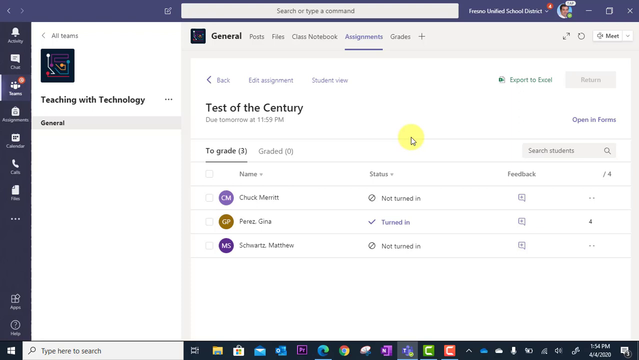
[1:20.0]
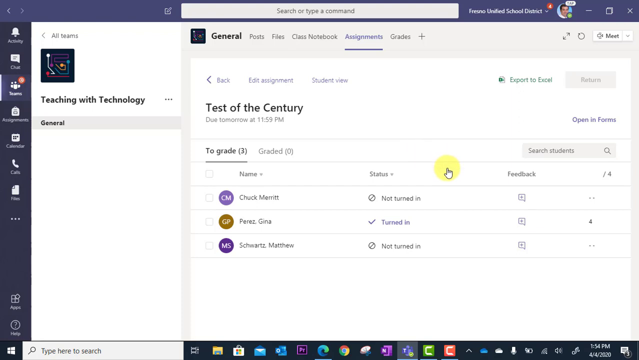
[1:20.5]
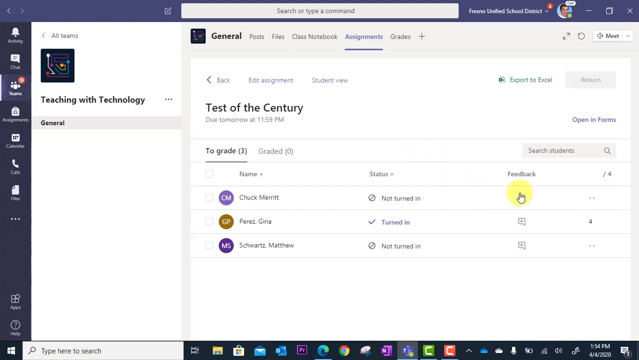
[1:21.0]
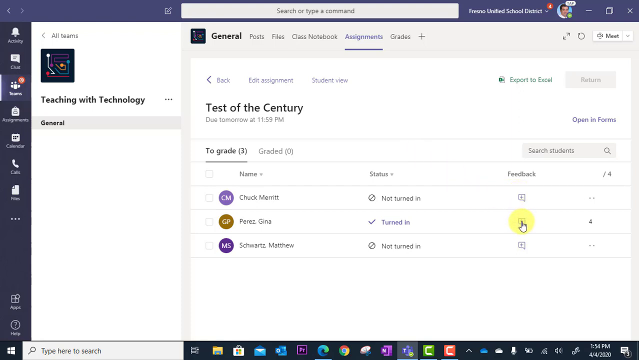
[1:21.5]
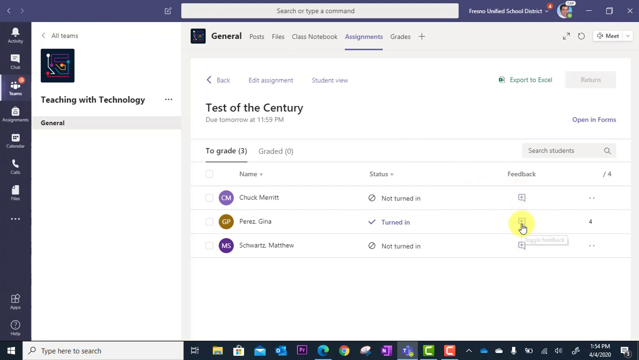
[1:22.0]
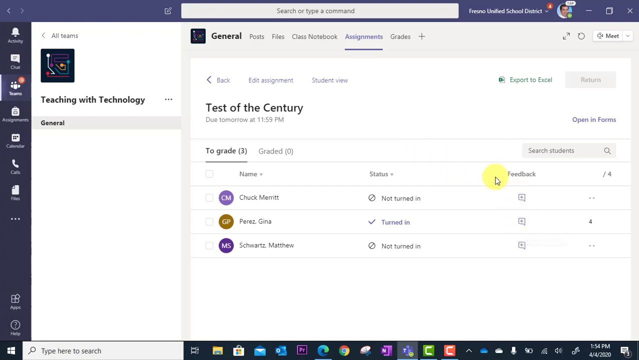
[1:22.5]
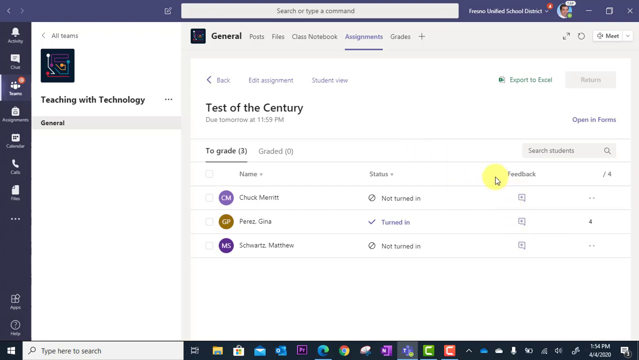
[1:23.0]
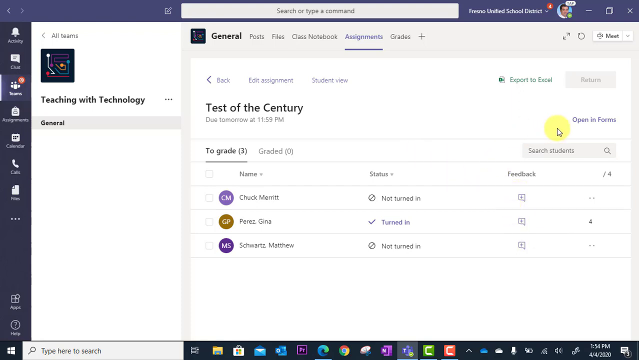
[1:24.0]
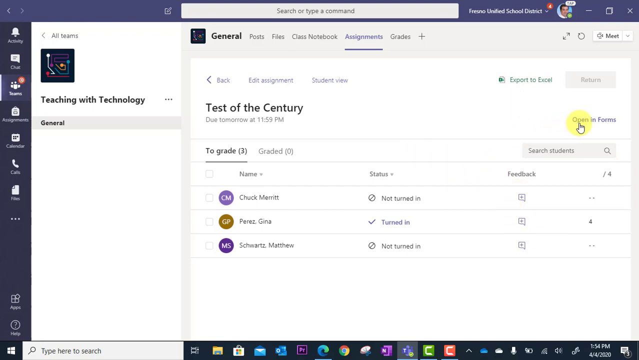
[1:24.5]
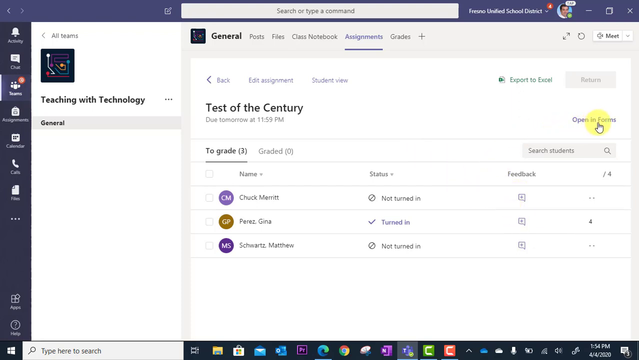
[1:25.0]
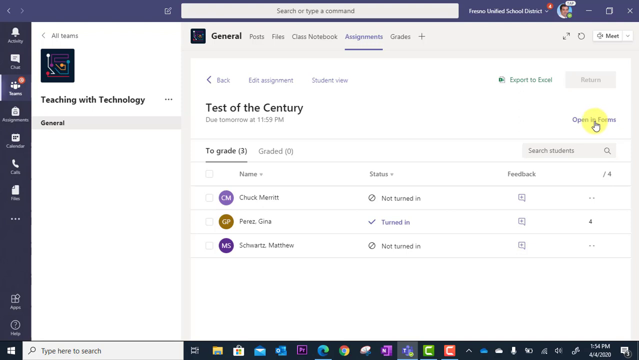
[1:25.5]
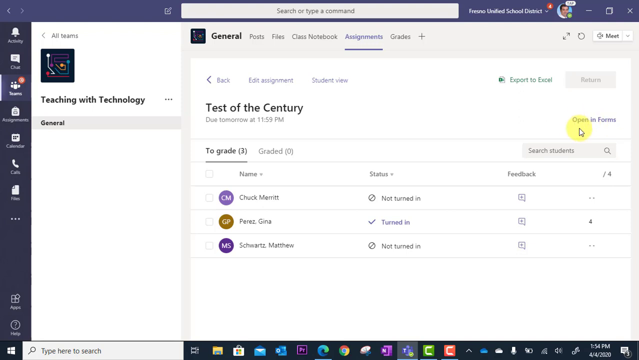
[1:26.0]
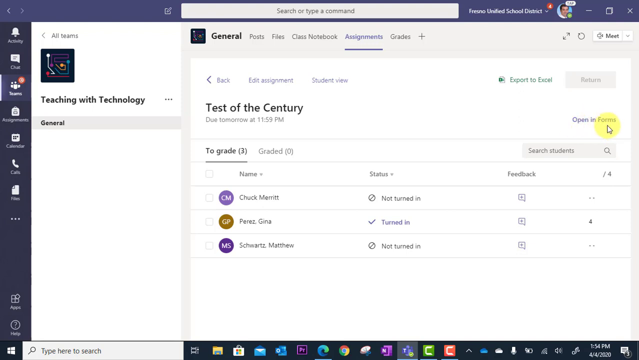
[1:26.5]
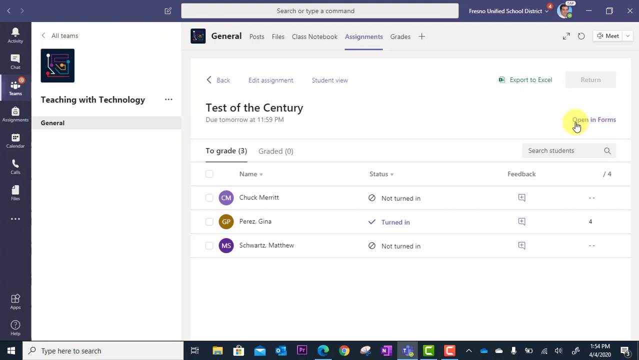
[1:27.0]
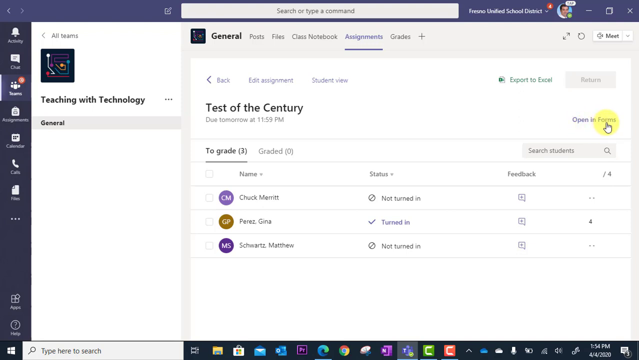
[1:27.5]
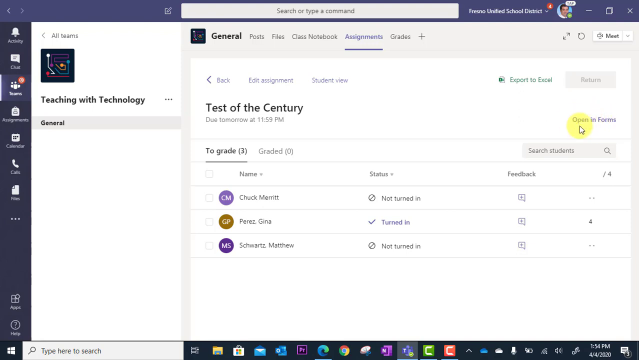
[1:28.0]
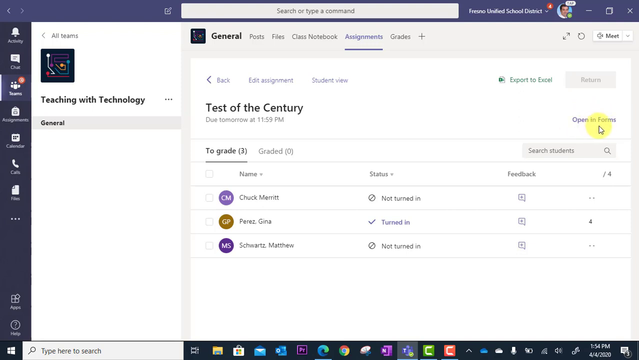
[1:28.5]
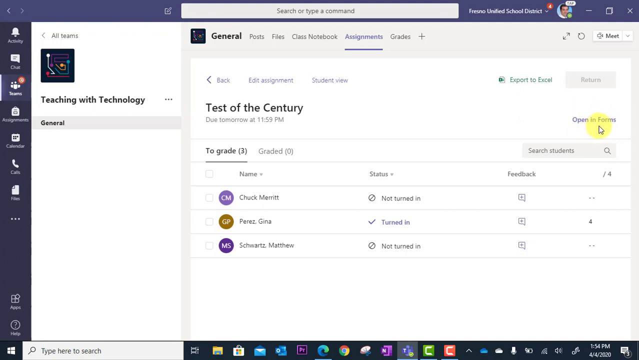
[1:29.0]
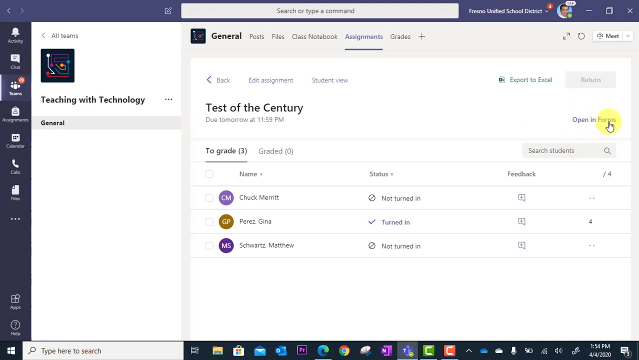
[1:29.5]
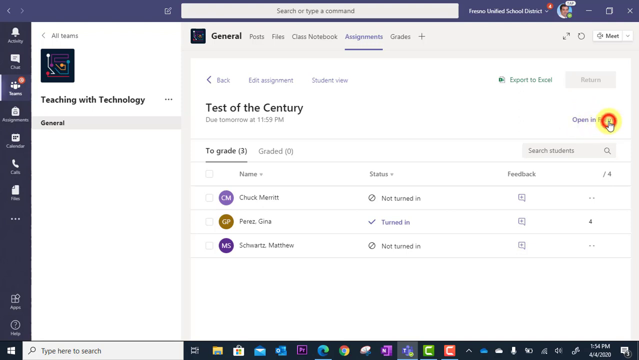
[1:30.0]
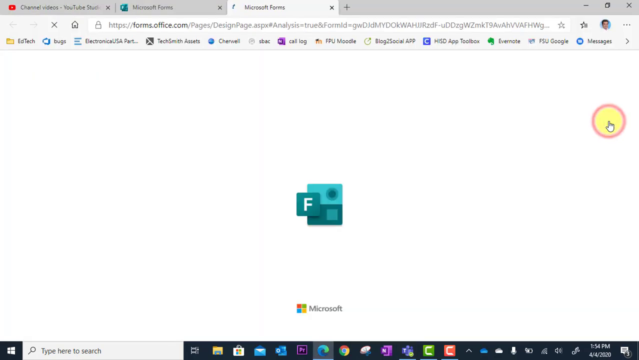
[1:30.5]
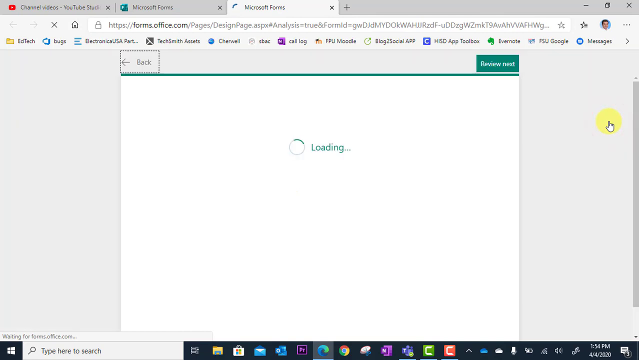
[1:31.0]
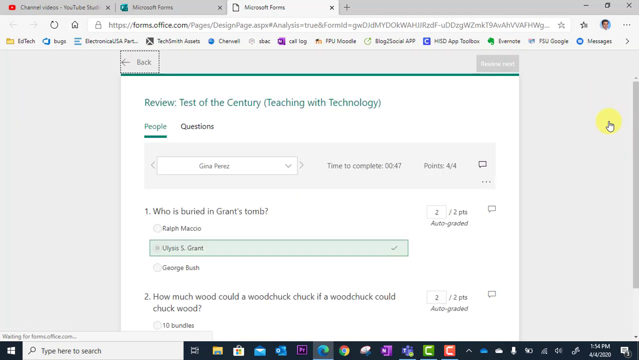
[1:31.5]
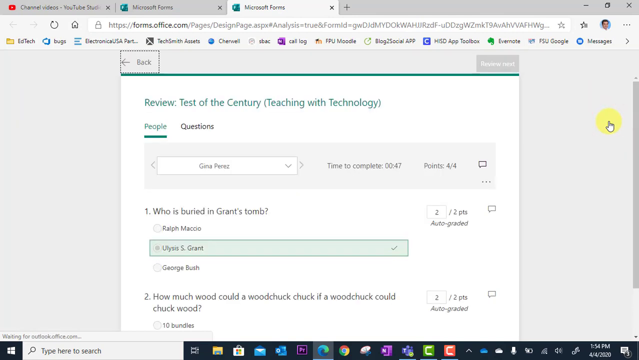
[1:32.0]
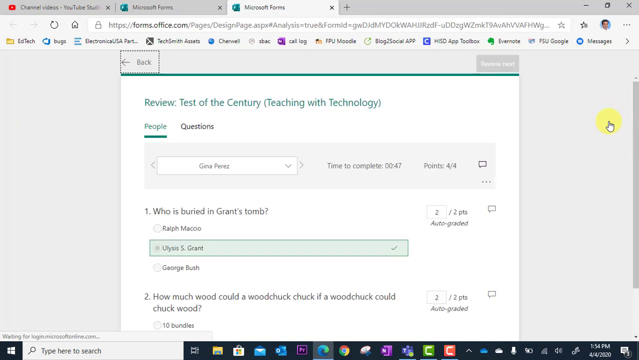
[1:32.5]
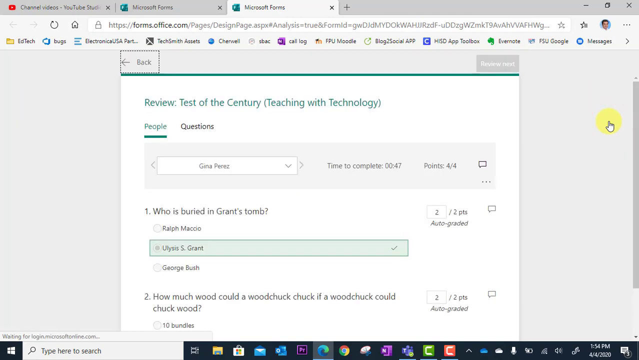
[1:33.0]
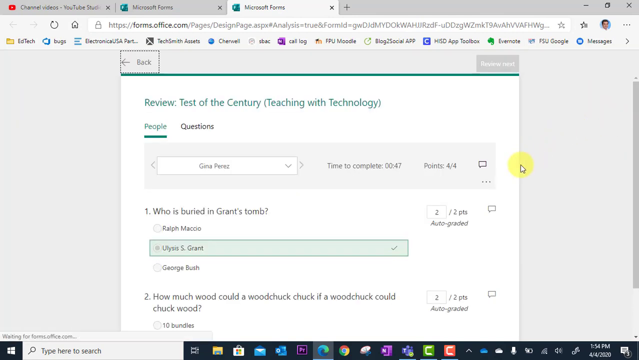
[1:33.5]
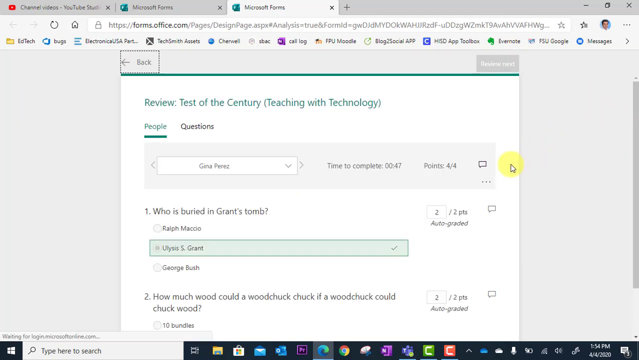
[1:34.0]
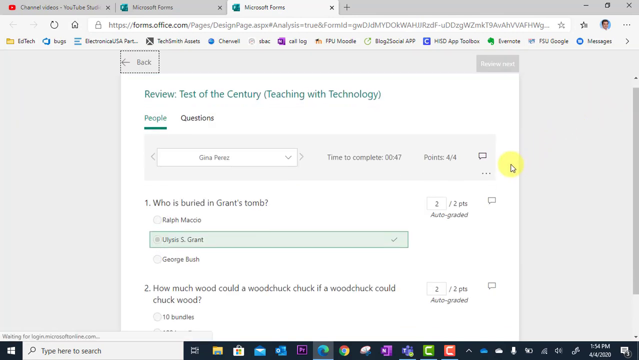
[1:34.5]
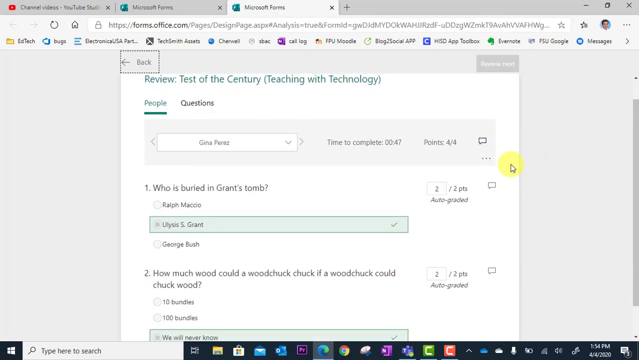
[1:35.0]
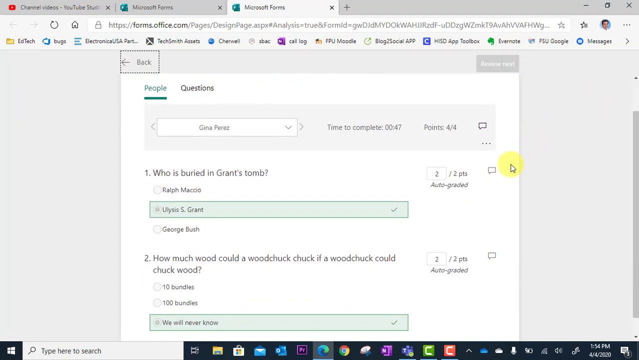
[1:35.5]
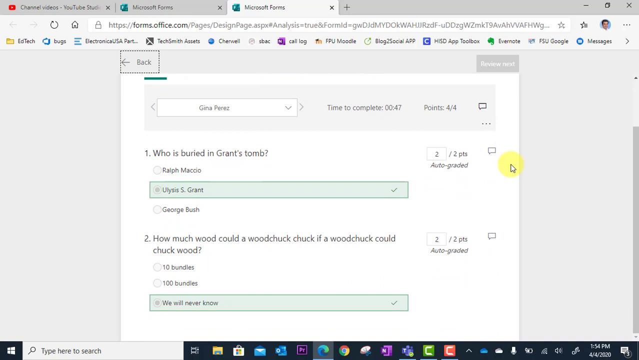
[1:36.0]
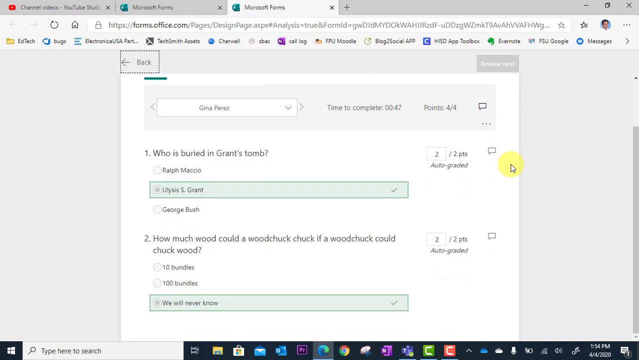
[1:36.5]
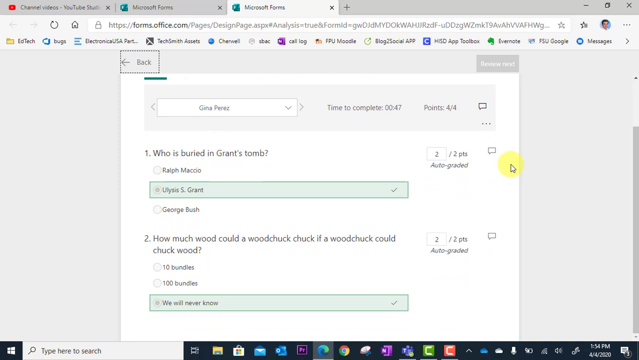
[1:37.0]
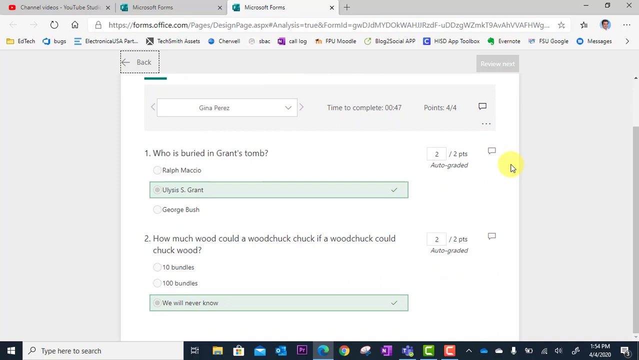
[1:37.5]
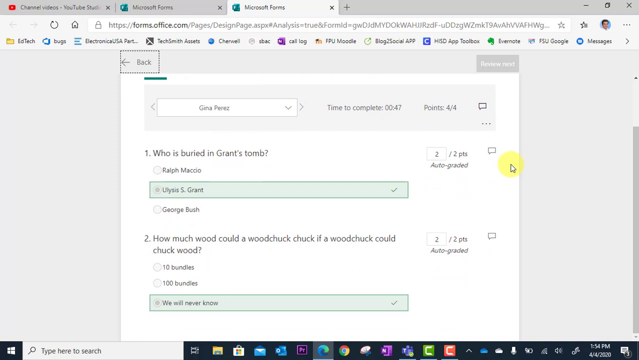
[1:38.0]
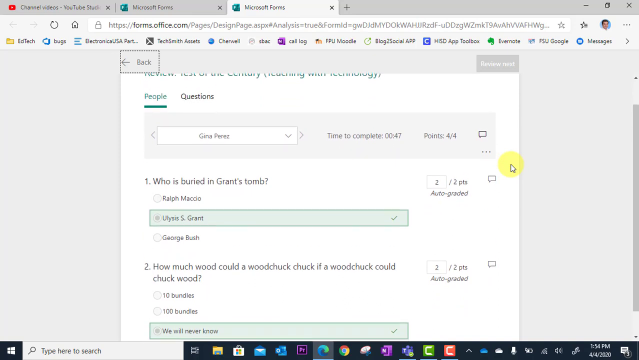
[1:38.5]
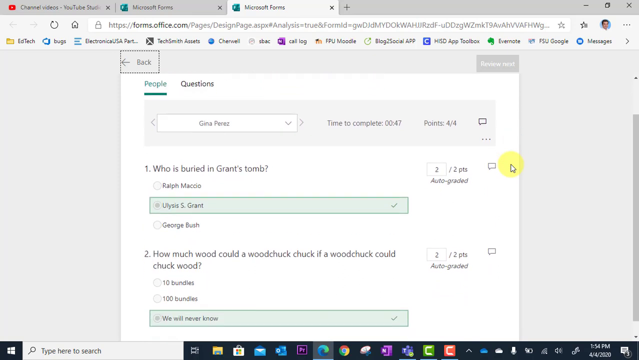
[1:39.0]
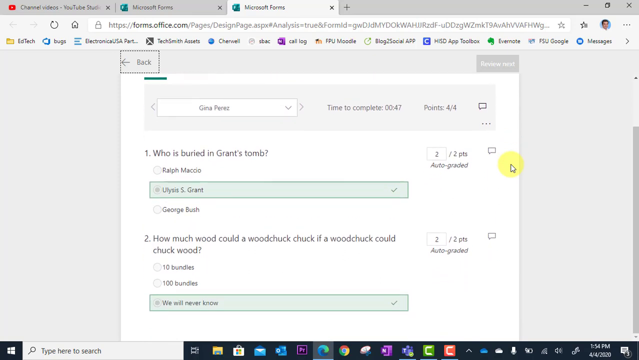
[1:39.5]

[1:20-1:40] The Test of the Century assignment page in Microsoft Teams shows the list of three students and their submission statuses. The cursor moves toward the feedback column for Gina Perez, who has turned in her work with a score of four of four. A small icon in the column is clicked, and the view transitions to a Microsoft Forms page displaying Gina Perez's submitted quiz. At the top of the Forms interface, the student's name is shown in a dropdown menu along with the time taken to complete the quiz, 47 seconds, and the total points earned, four out of four. Below, the quiz is divided into multiple-choice questions. The first question asks who is buried in Grant's tomb; the answer Grant is highlighted, and it is marked as worth two points and auto-graded. Two incorrect options, Ralph Macchio and George Bush, are visible but not selected. The second question asks how much wood a woodchuck could chuck; the chosen answer, "we will never know," is highlighted in green as correct, worth two points, and auto-graded, with the two incorrect options, 10 bundles and 100 bundles, listed above it. The page has a white background with gray dividing lines between questions, and the browser tabs and bookmarks bar are visible at the top and the Windows taskbar at the bottom of the screen.